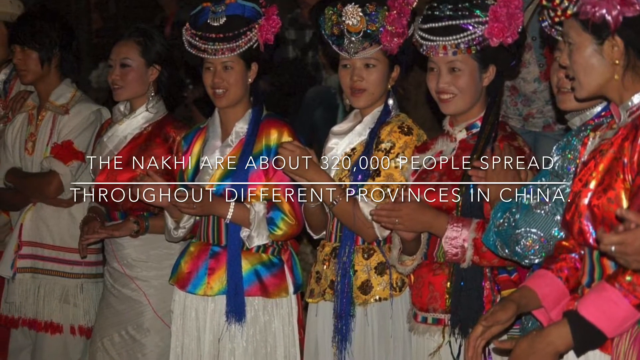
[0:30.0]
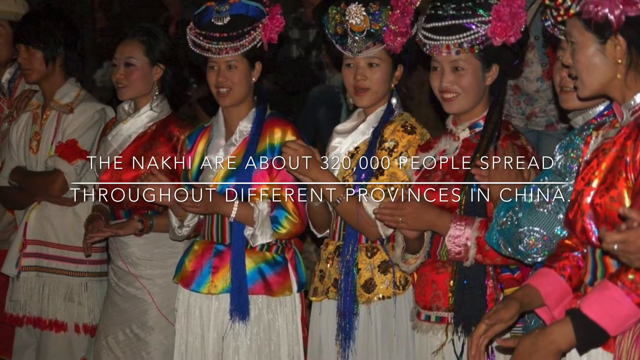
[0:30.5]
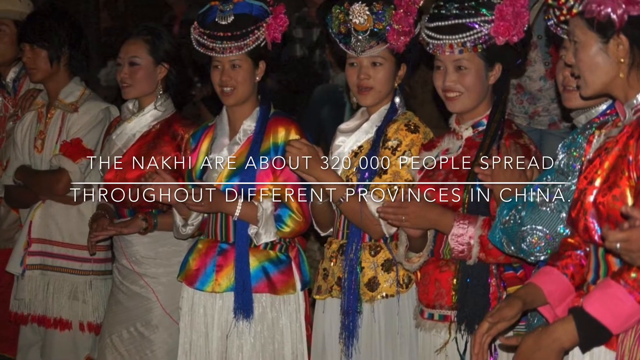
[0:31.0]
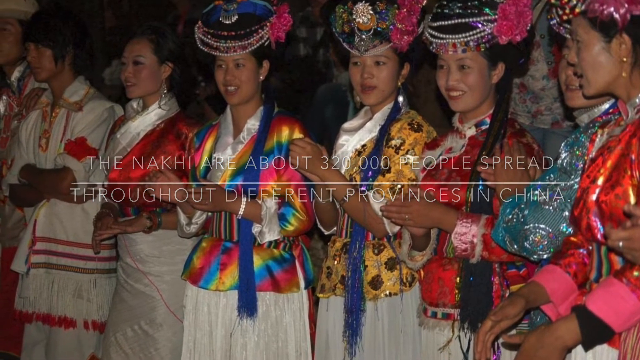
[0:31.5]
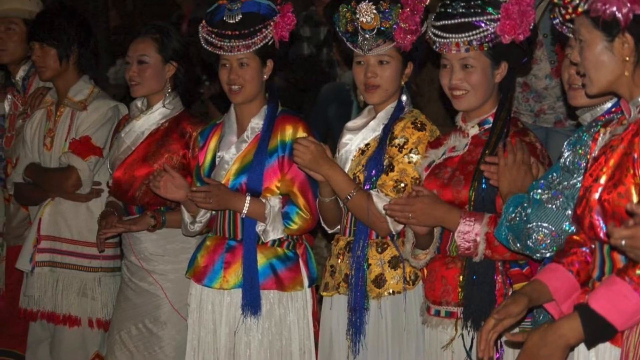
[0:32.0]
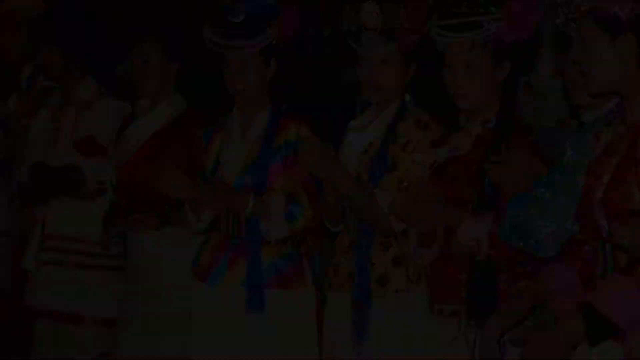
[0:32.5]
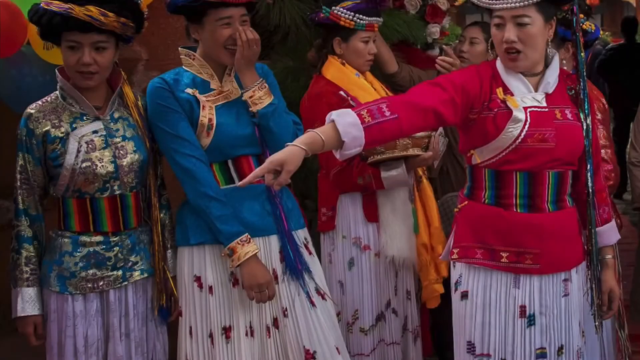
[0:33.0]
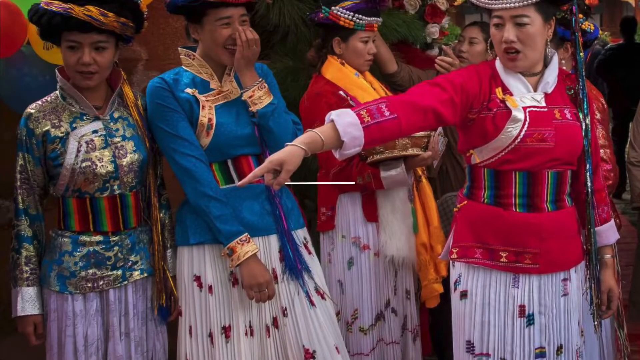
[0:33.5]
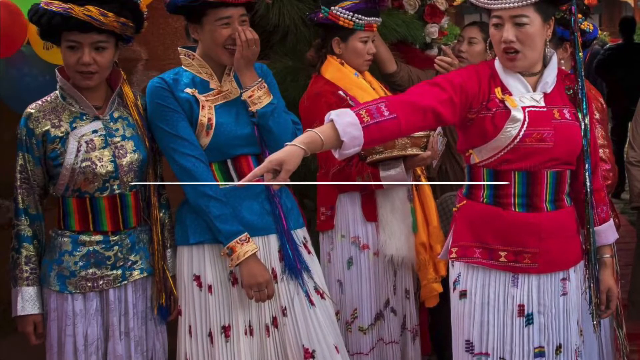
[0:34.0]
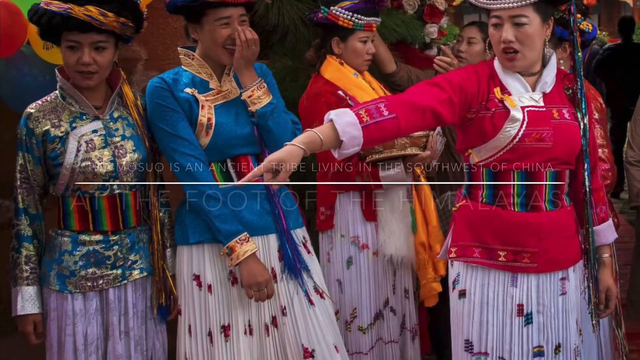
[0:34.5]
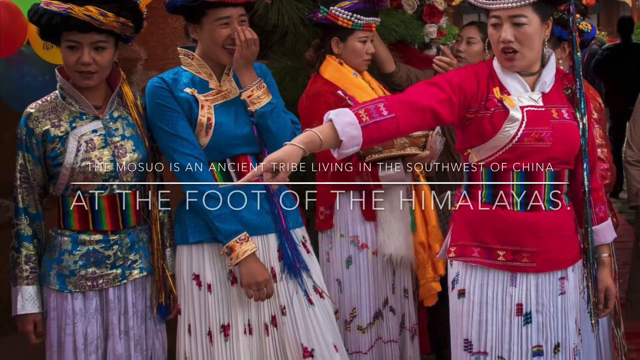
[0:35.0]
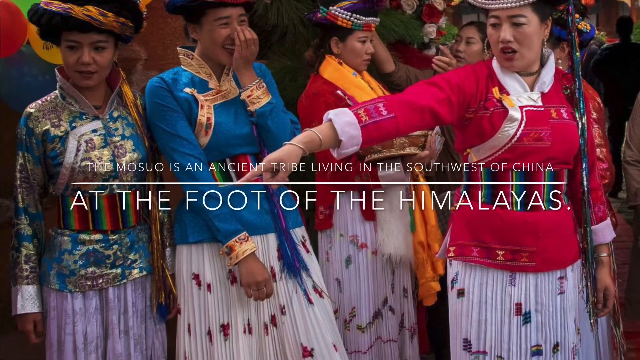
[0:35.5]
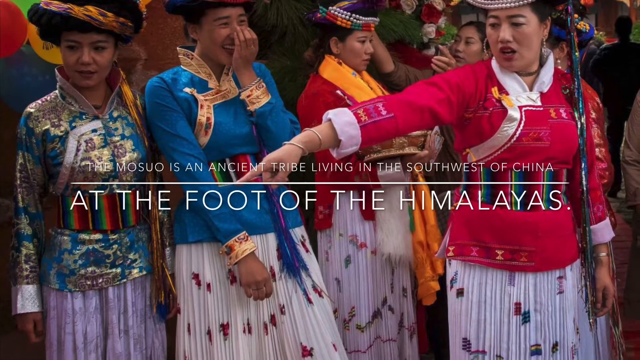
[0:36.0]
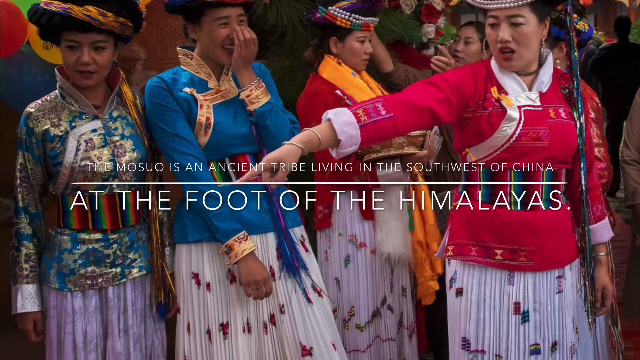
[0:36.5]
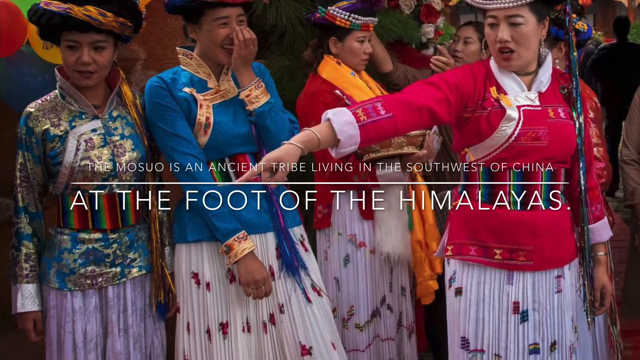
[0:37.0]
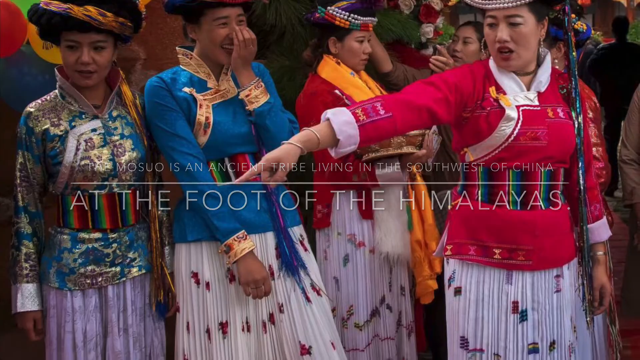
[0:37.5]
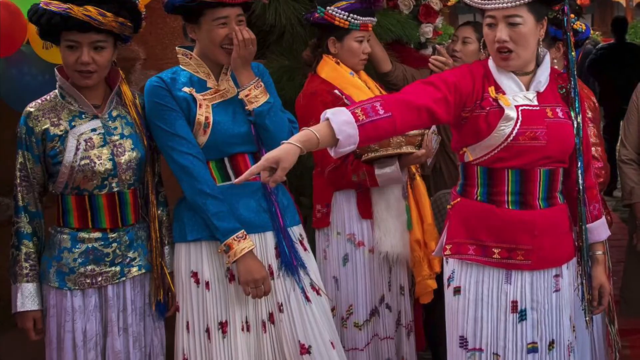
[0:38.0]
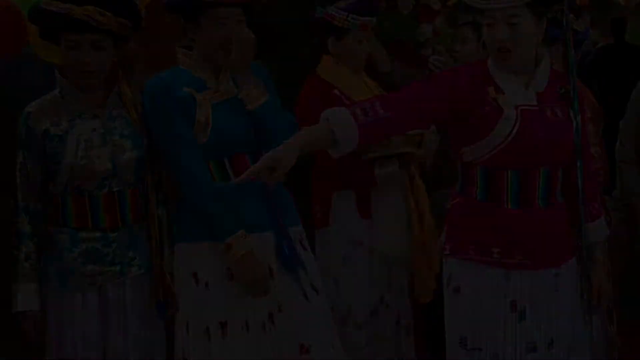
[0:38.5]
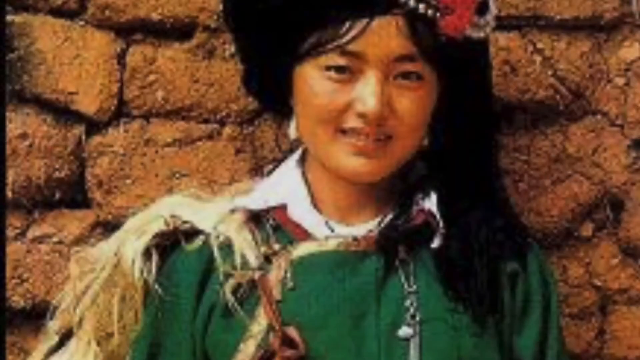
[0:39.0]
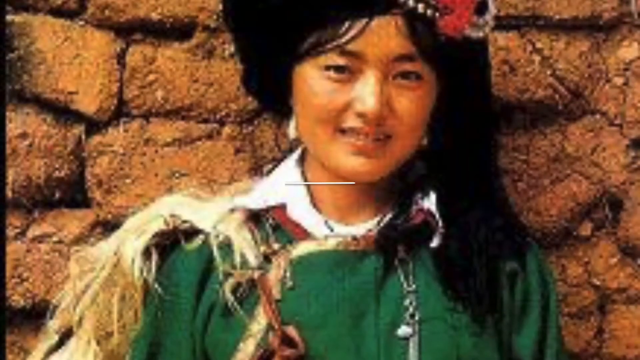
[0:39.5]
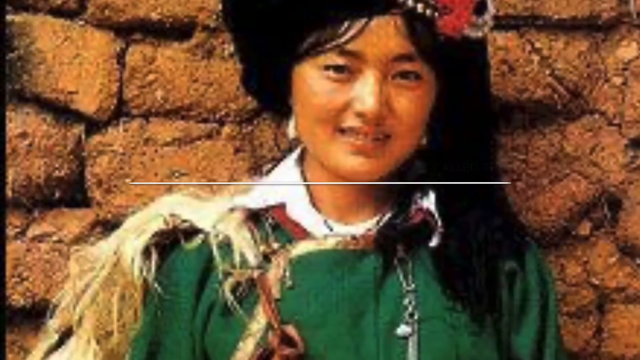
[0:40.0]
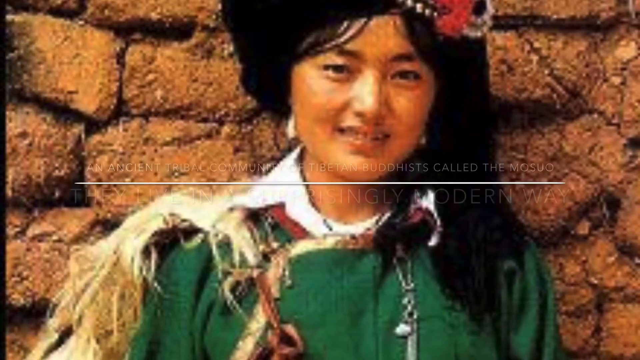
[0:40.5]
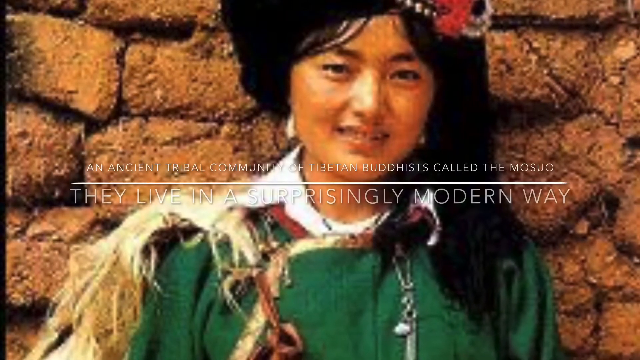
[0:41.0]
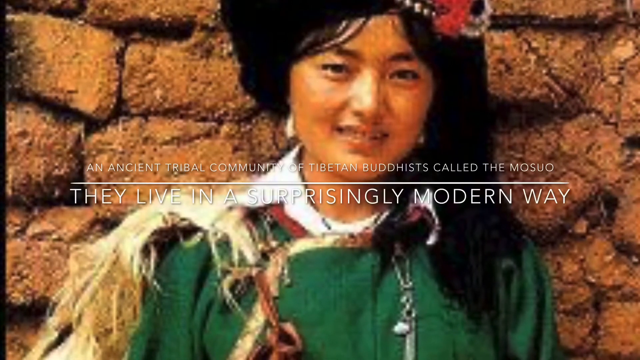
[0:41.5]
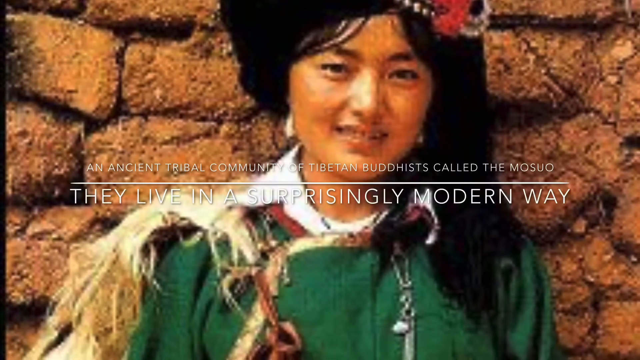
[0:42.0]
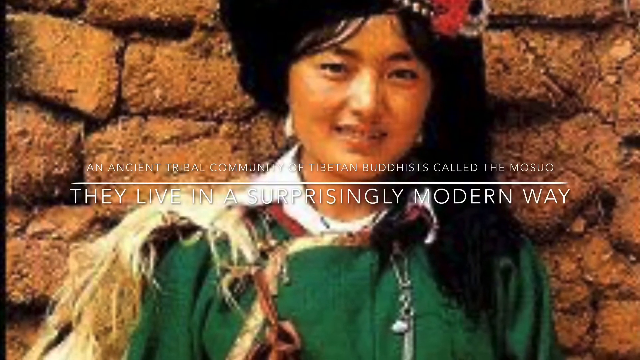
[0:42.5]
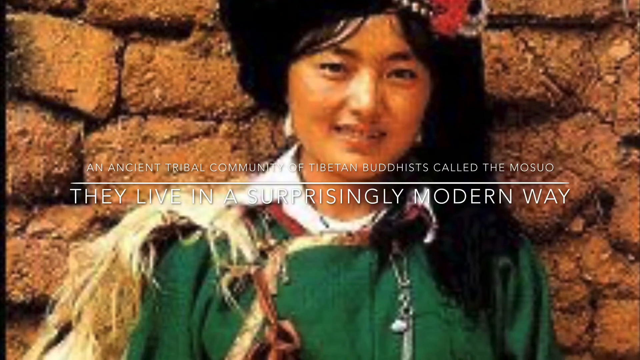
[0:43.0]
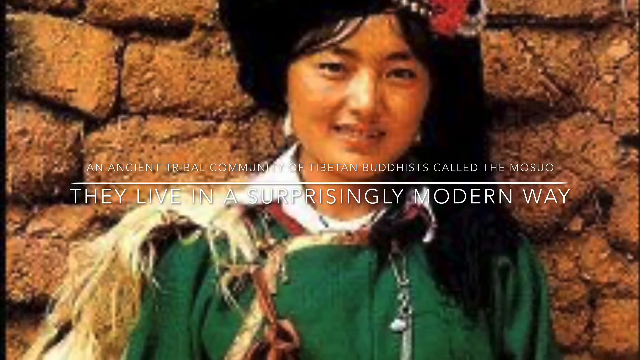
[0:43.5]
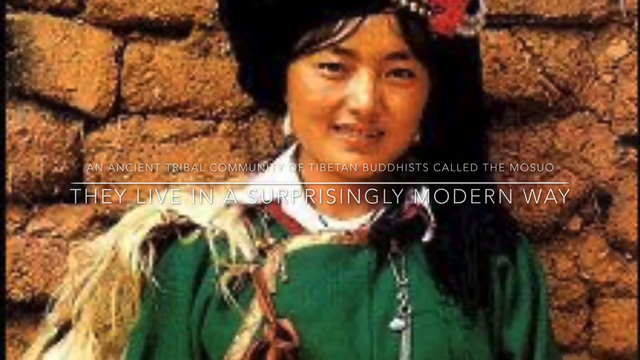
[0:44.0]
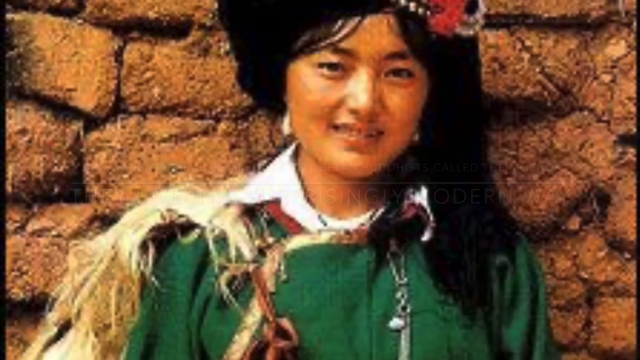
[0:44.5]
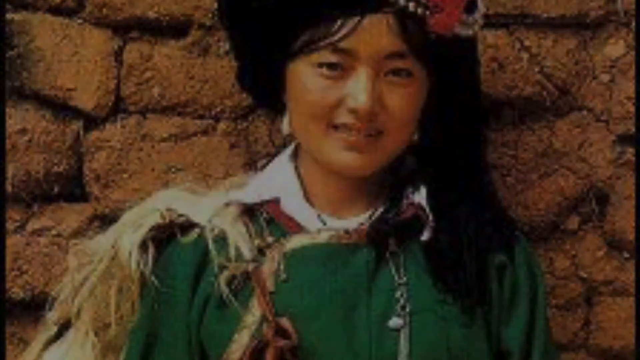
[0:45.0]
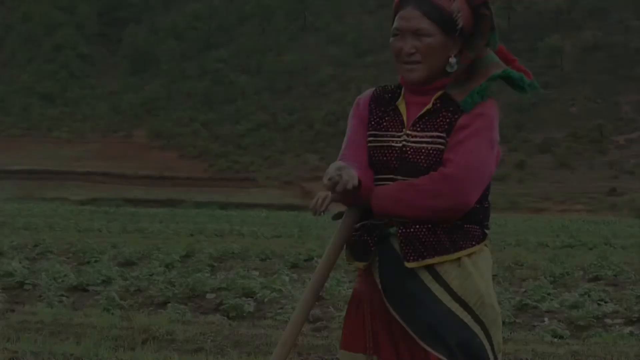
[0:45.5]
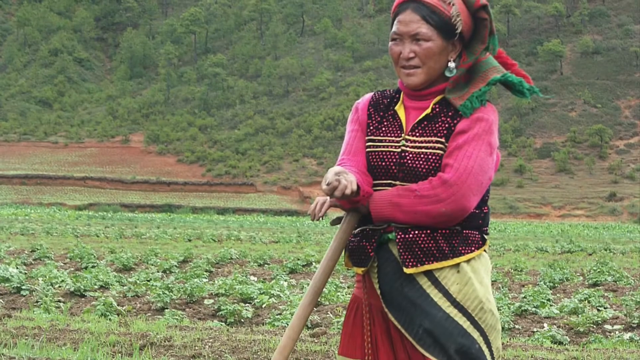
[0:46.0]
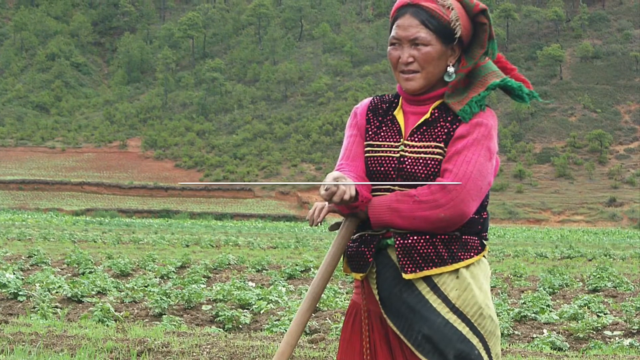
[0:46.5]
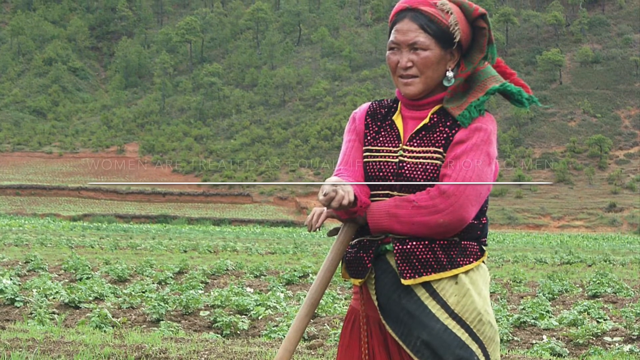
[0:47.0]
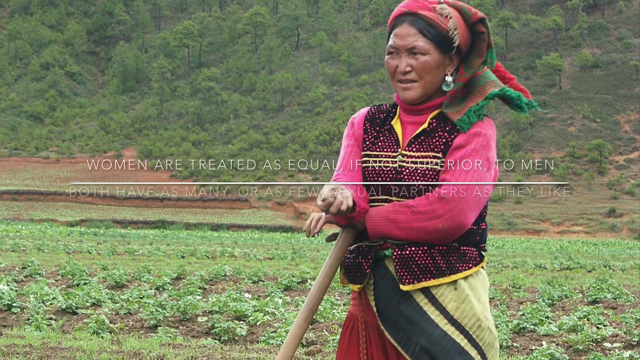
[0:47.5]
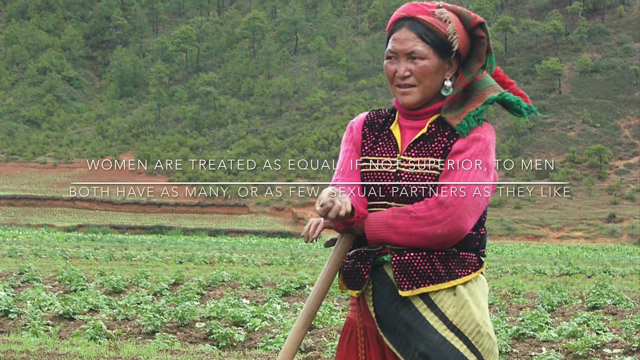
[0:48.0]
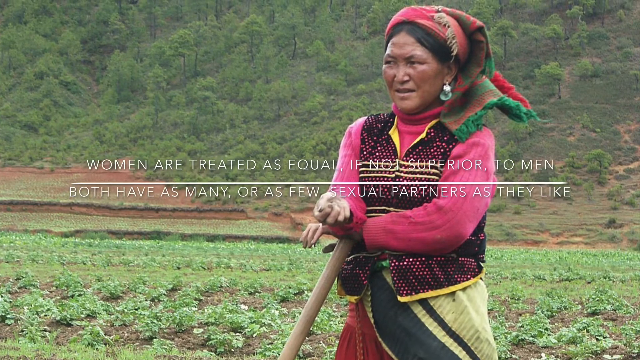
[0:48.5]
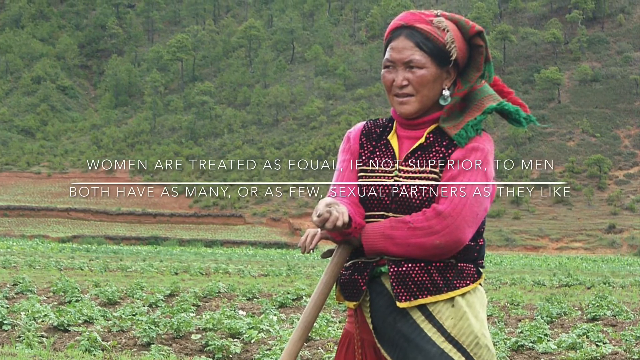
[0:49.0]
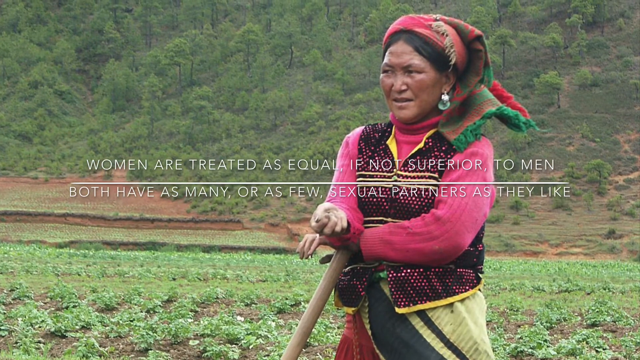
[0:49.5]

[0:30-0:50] More text about the tribe appears, stating that there are about 320,000 people spread throughout different provinces in China. The text is arranged as one connected statement, with smaller text at the top and bigger text at the bottom, divided by a line, so the two parts look like they could be separate. Another picture shows more women wearing really fancy-looking hats. Text in the middle then reads "the Muso is an ancient tribe living in the southwest of China at the foot of the Himalayas." A woman on the right holds out her arm, kind of pointing at something, and a lady in blue is laughing. Further text follows about how they live in a surprisingly modern way.